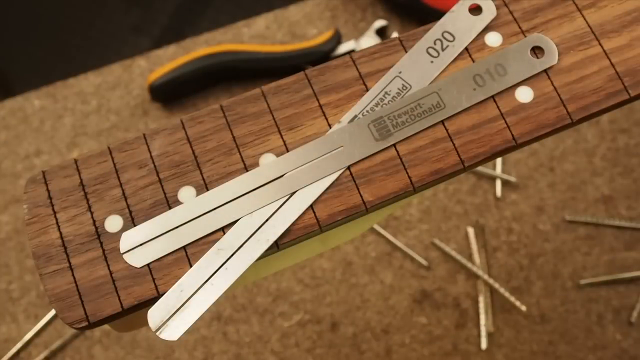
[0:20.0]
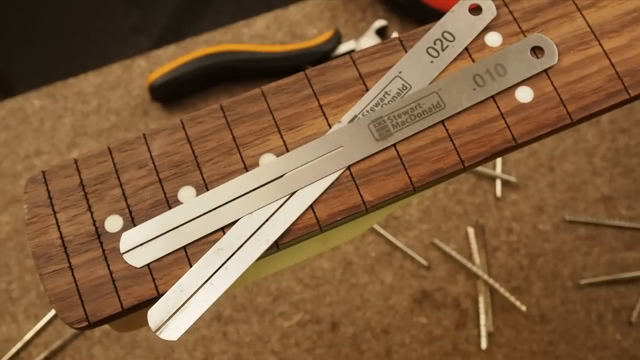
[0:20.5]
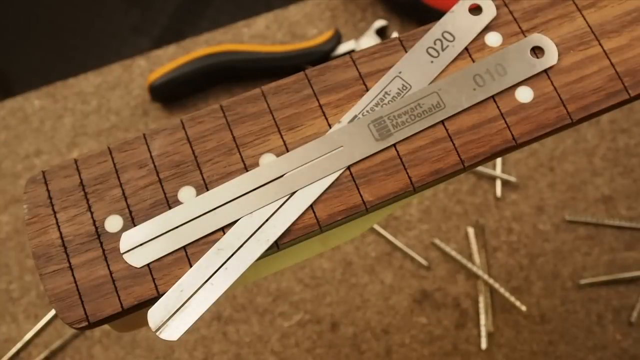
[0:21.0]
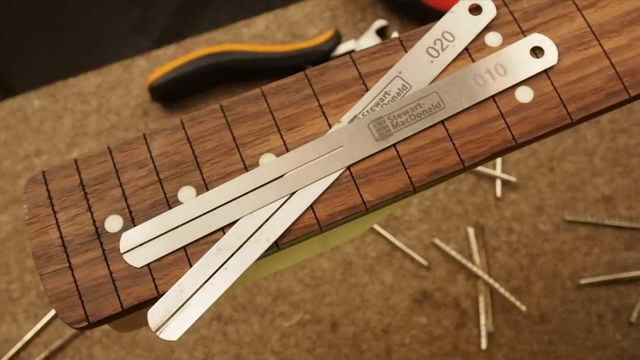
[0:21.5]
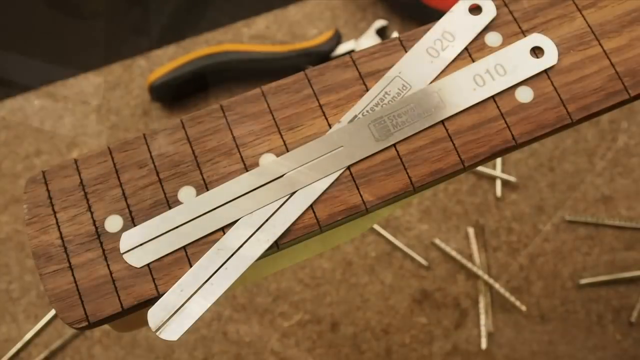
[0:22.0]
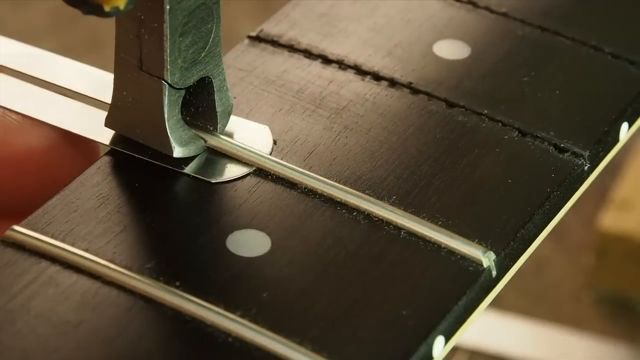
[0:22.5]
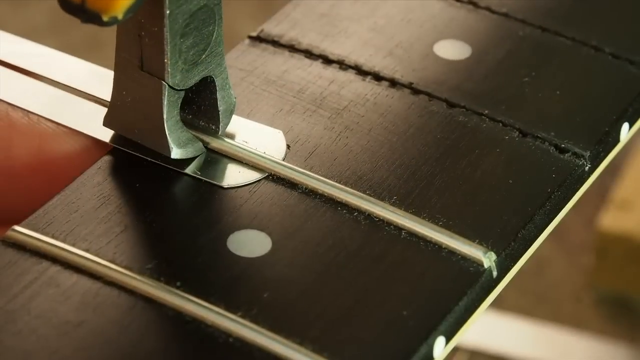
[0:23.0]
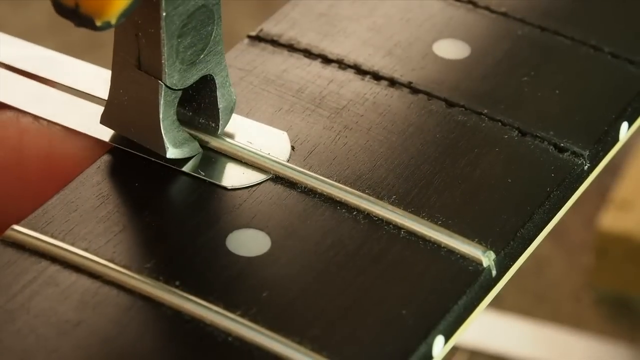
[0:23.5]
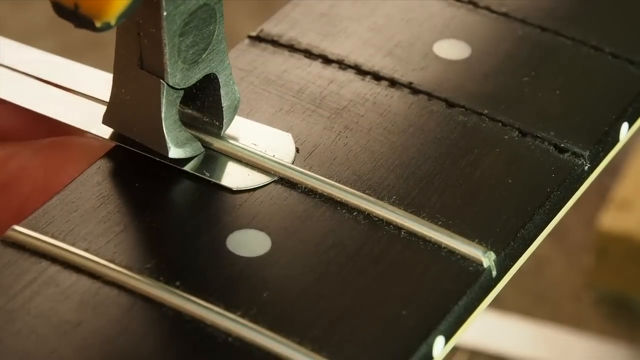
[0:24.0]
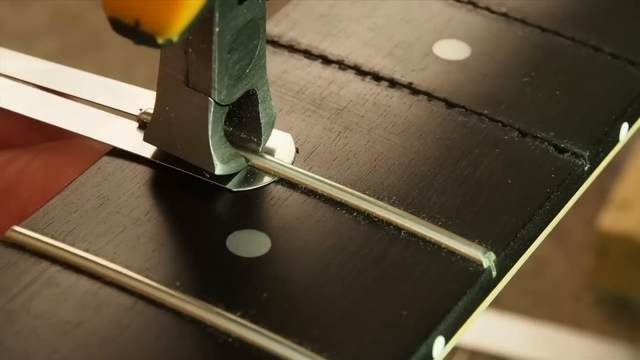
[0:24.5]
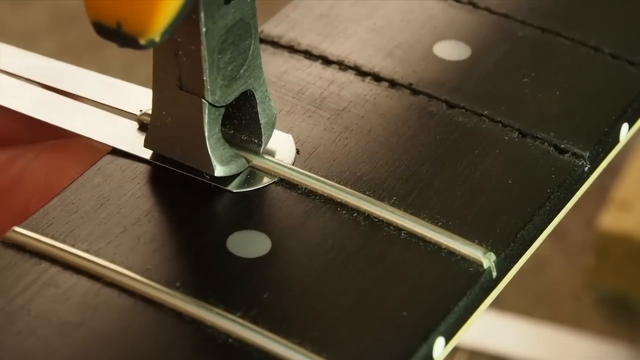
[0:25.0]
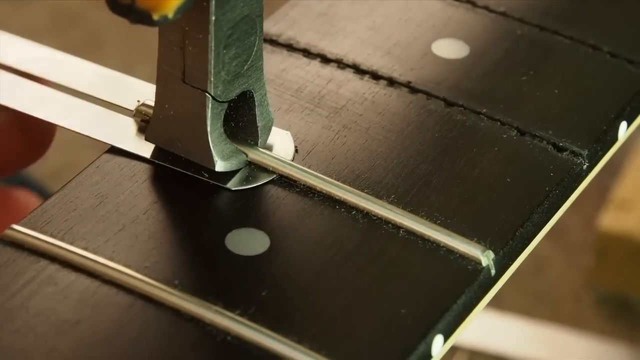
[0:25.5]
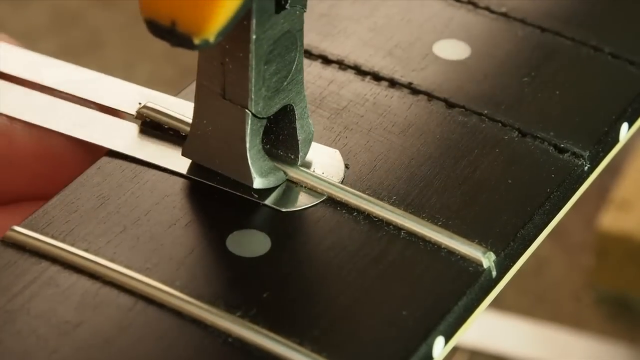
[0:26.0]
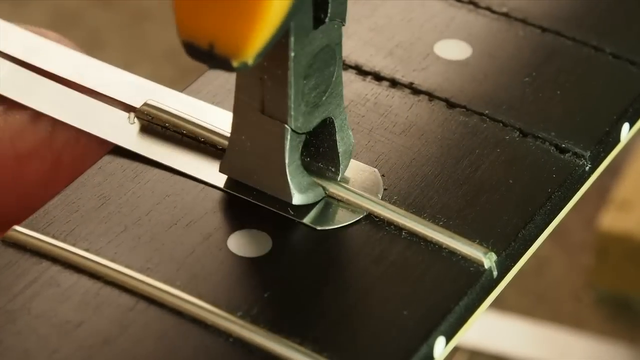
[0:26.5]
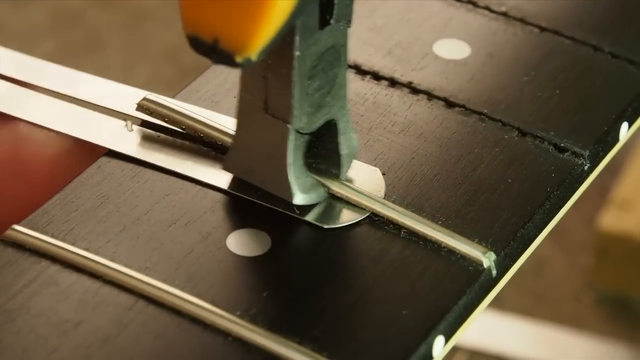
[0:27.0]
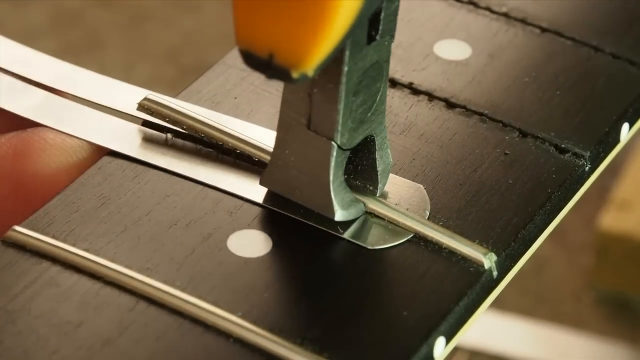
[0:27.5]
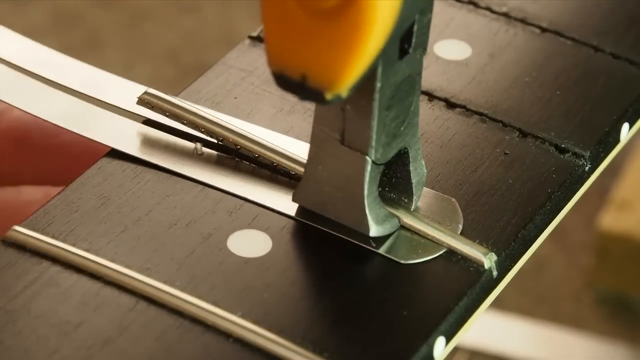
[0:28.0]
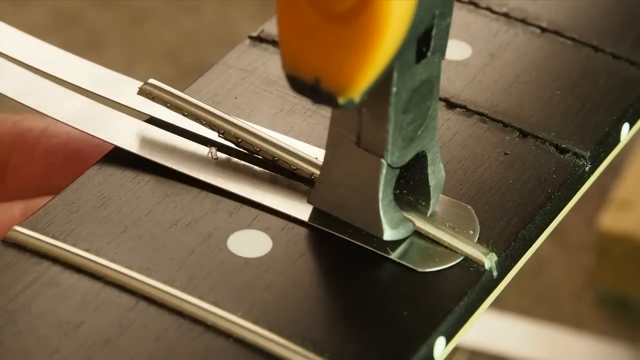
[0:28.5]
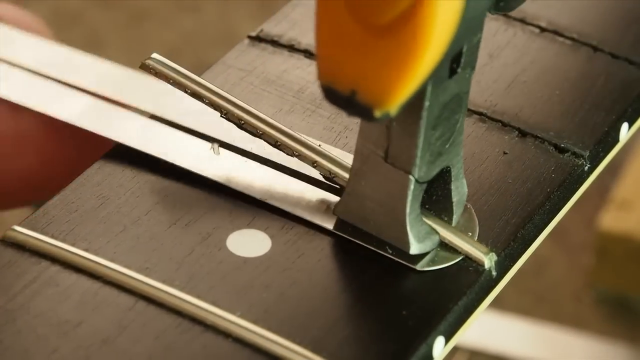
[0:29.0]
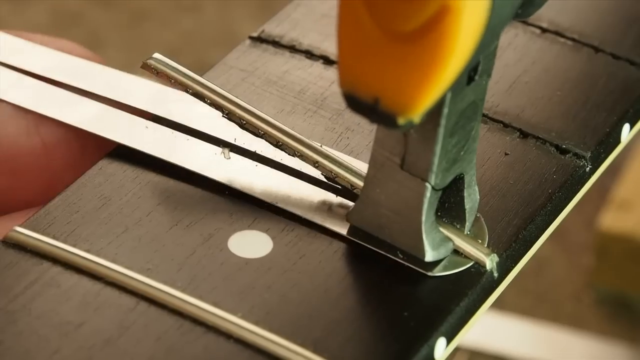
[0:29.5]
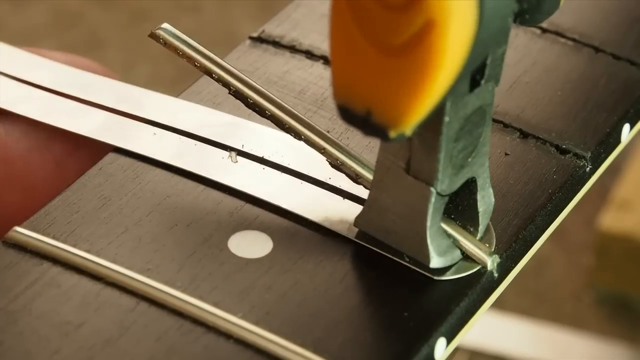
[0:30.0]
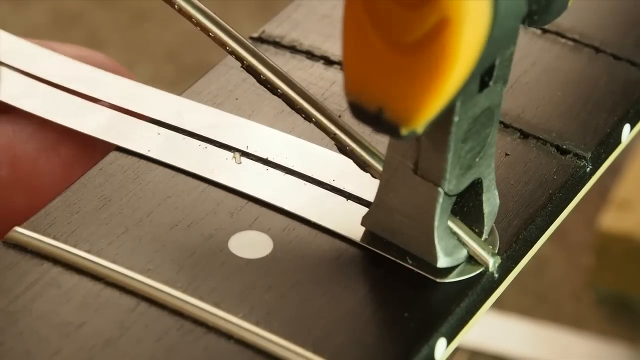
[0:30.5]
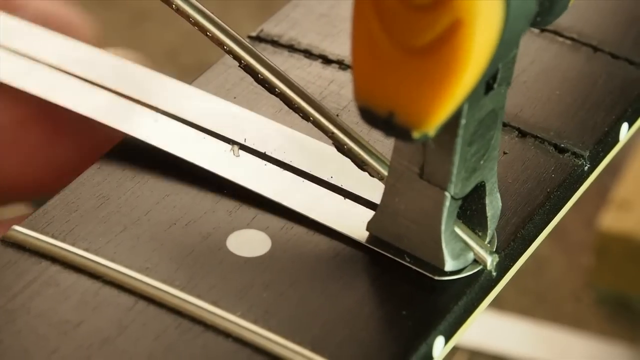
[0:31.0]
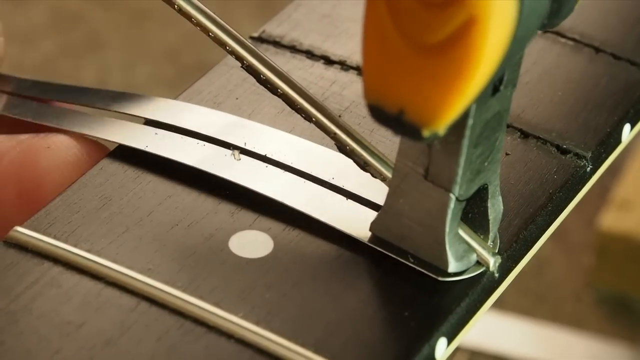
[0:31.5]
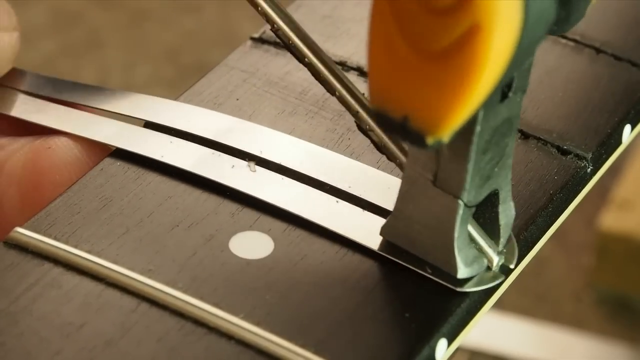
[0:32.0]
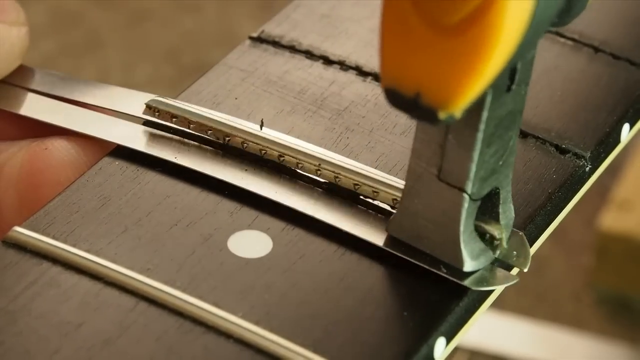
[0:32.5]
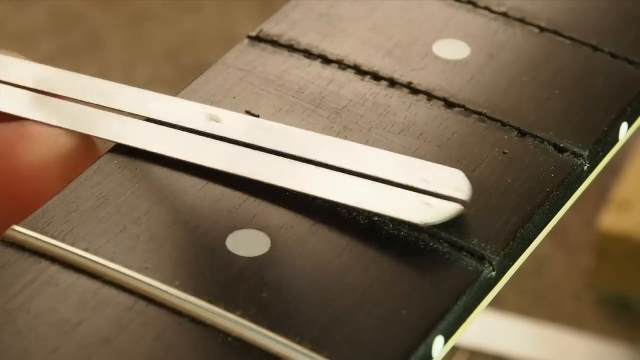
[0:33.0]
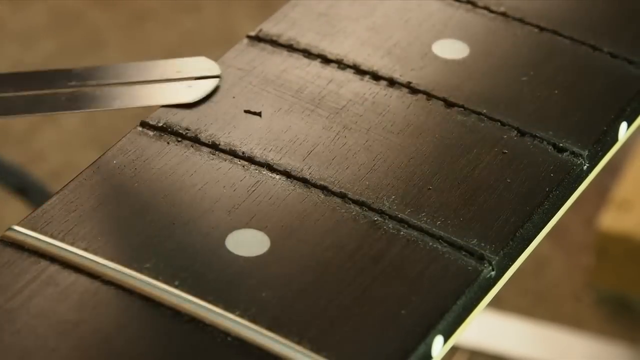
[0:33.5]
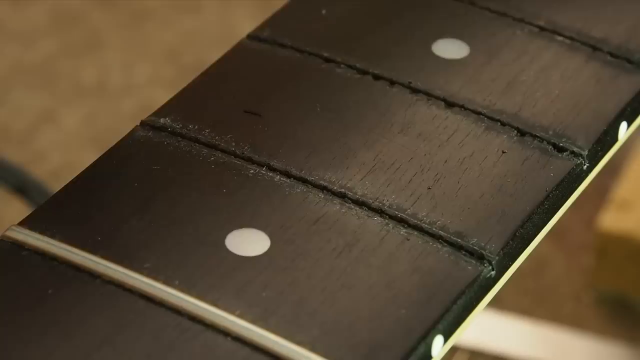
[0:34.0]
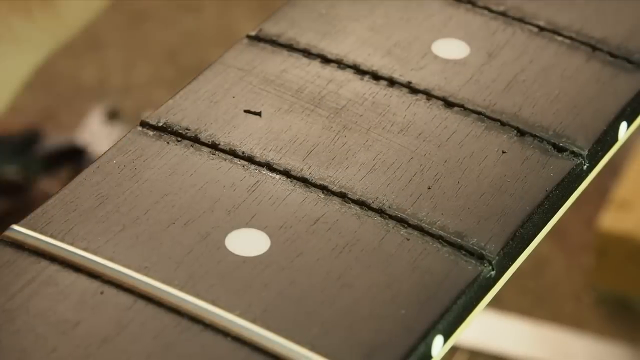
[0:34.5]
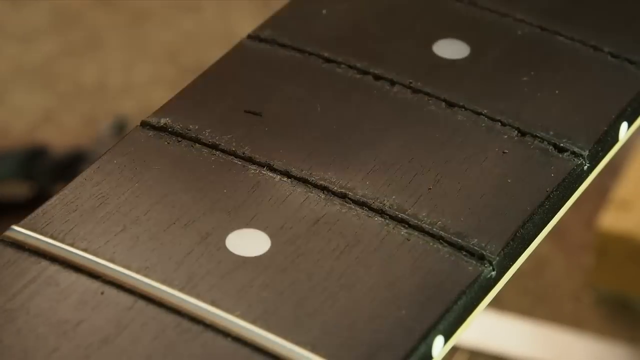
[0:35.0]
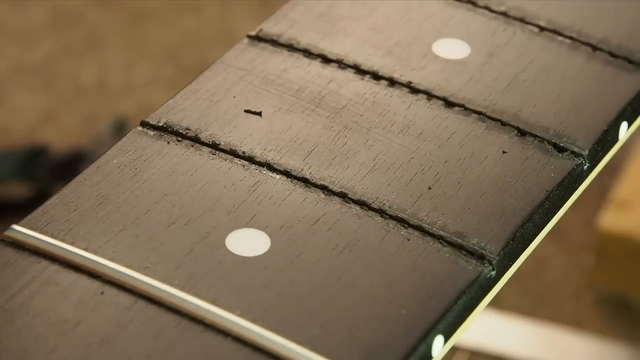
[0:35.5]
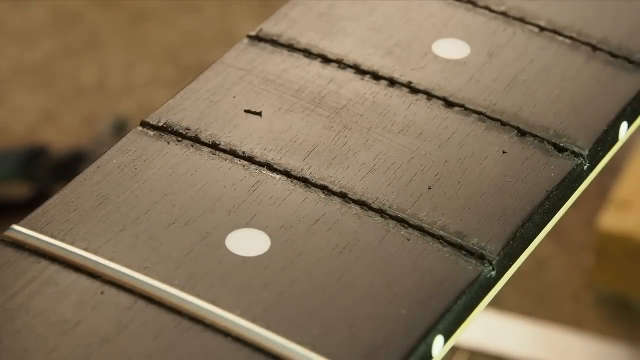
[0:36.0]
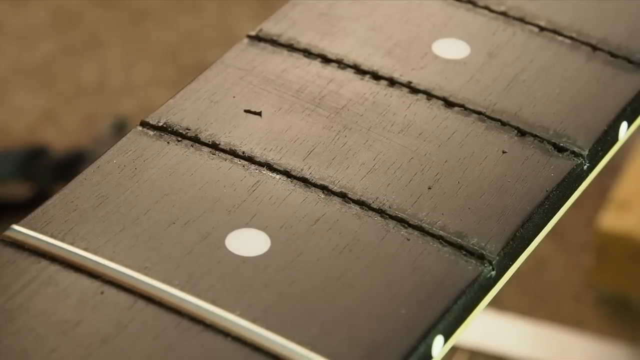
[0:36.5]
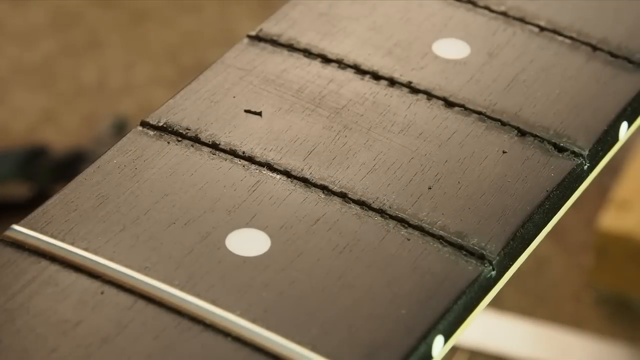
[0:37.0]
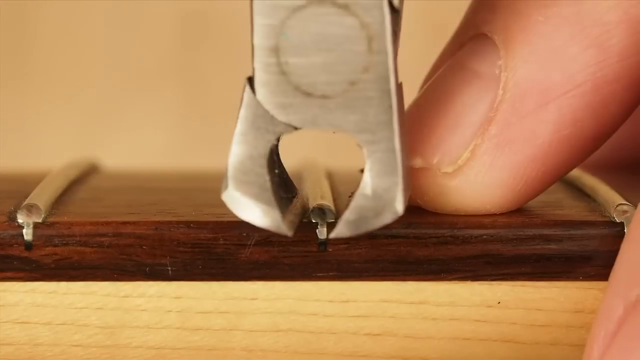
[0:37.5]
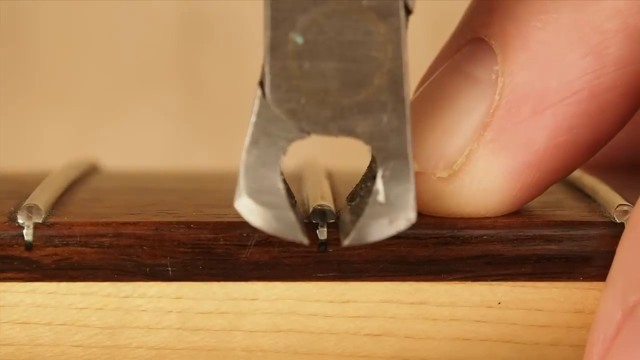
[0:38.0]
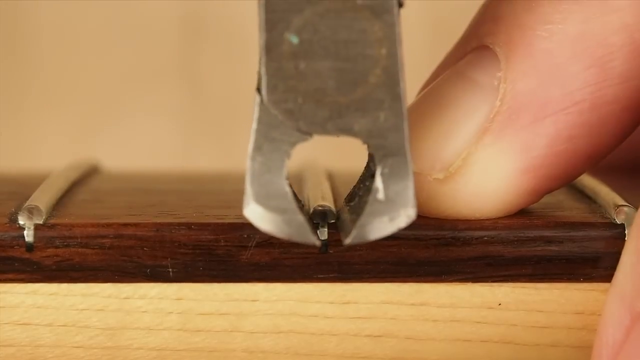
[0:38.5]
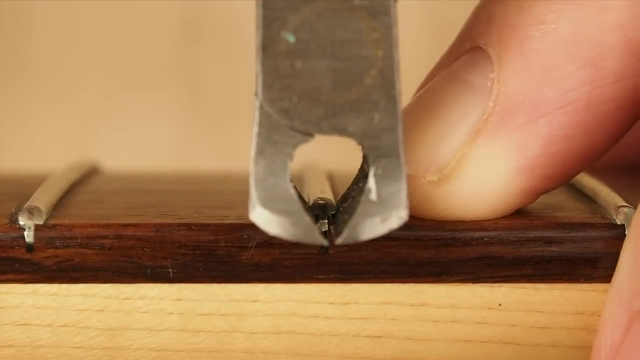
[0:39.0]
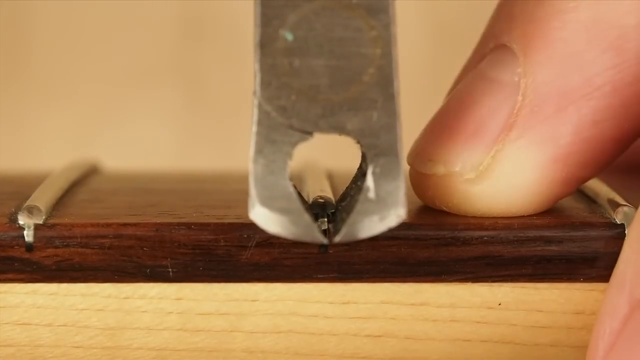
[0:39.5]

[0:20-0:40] The man continues removing the metal things from the wooden thing, moving on to the next one. He is almost done, with only one or two left. Lines and sketches are left behind on the wooden thing where the metal things were removed. His name is also written on the video.